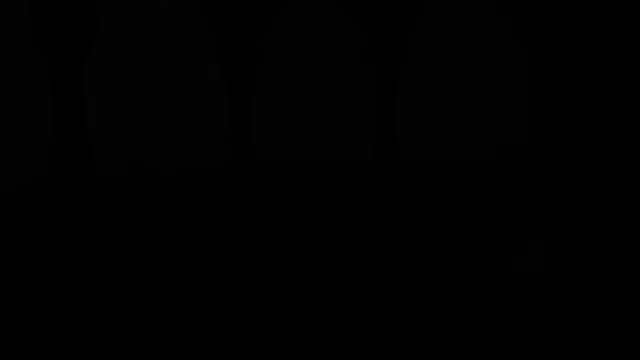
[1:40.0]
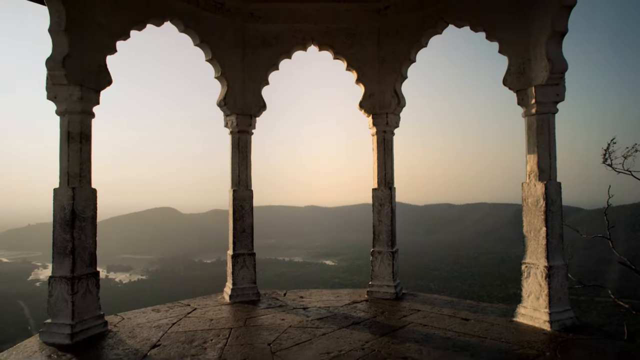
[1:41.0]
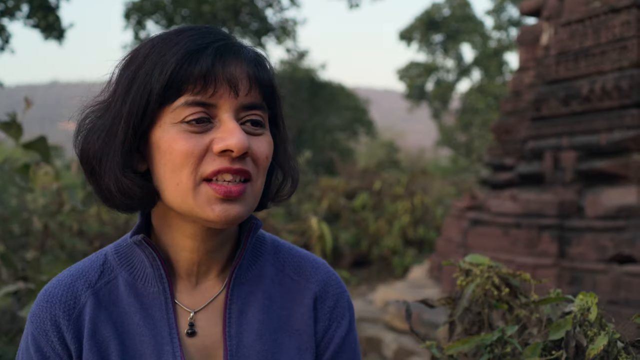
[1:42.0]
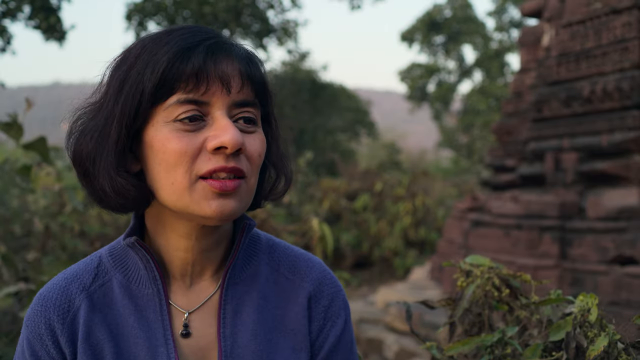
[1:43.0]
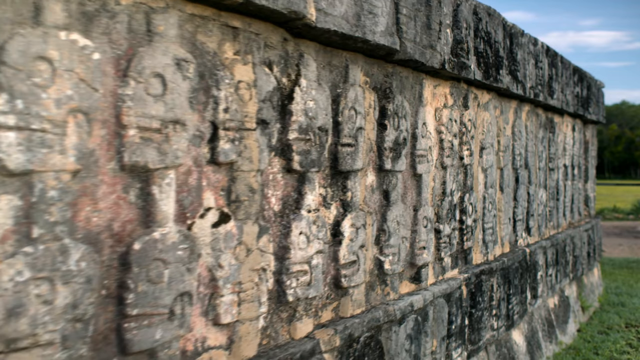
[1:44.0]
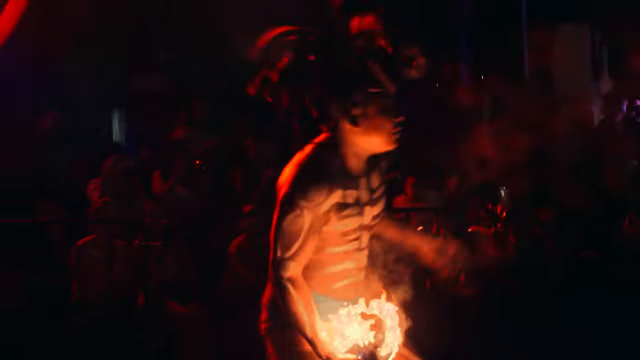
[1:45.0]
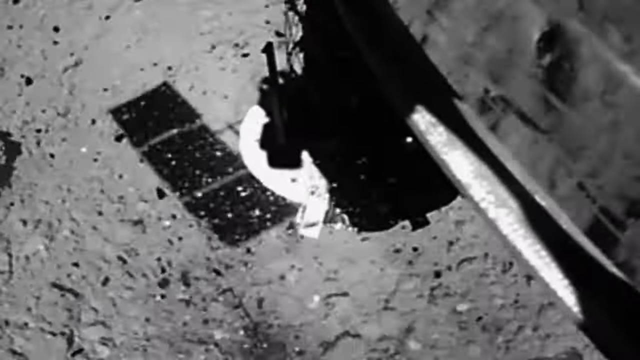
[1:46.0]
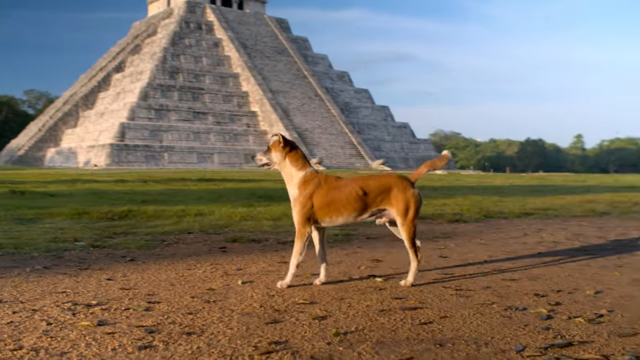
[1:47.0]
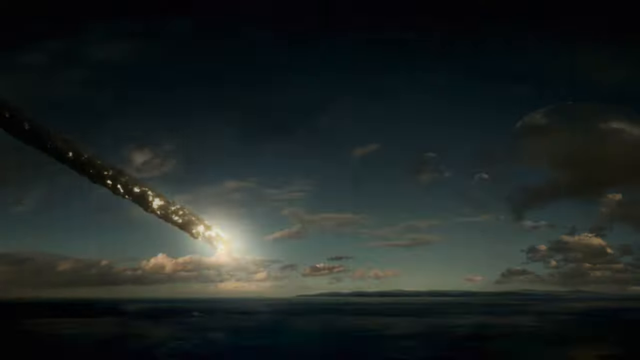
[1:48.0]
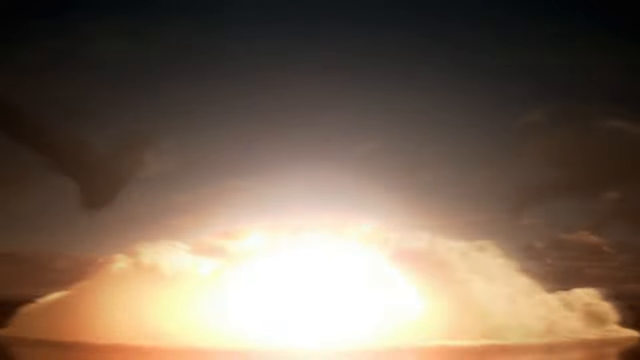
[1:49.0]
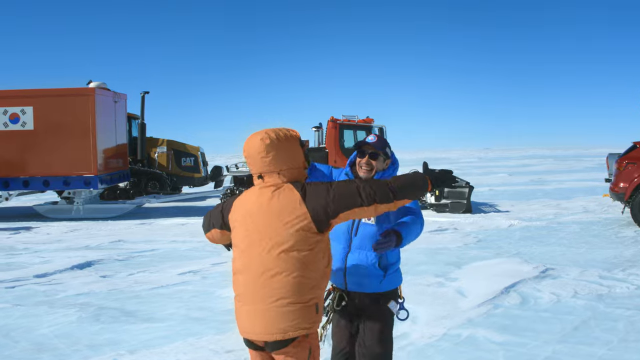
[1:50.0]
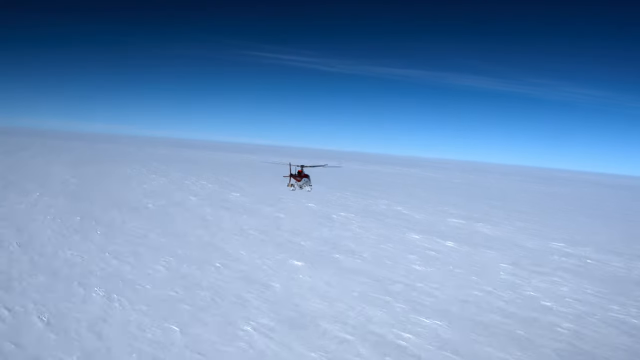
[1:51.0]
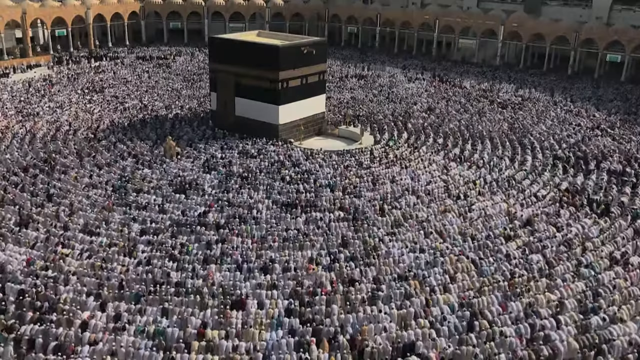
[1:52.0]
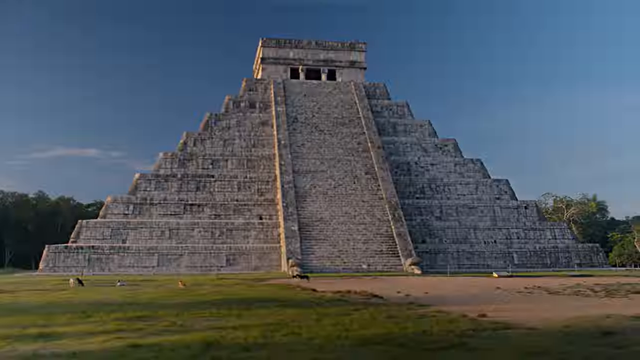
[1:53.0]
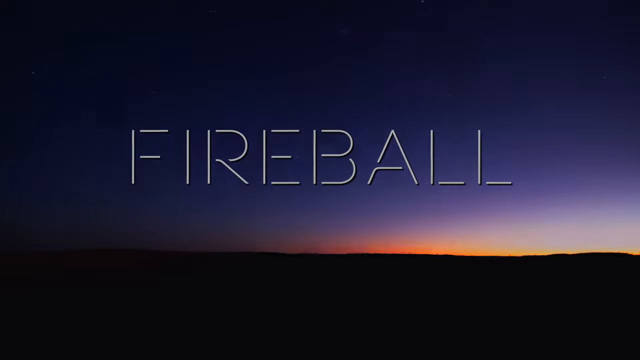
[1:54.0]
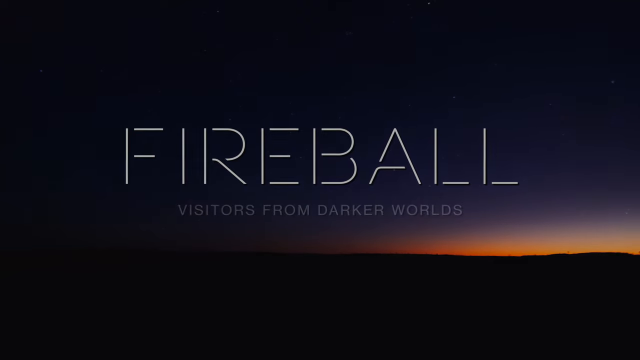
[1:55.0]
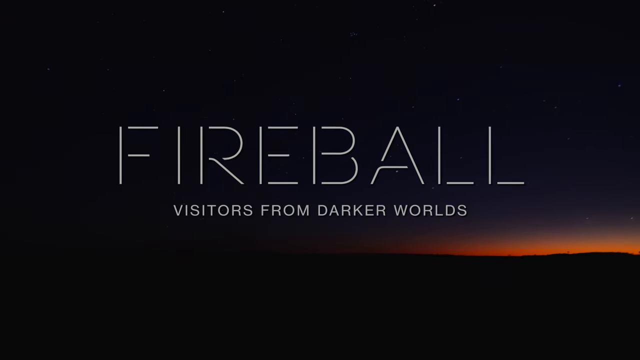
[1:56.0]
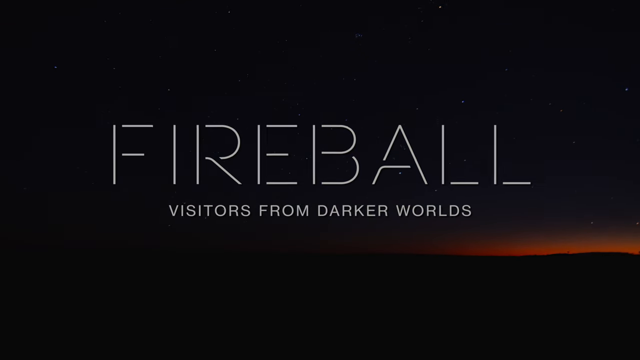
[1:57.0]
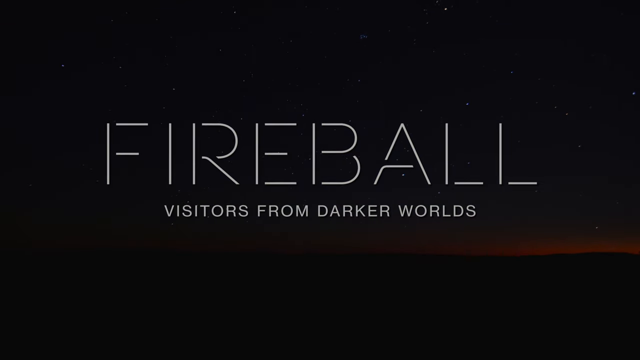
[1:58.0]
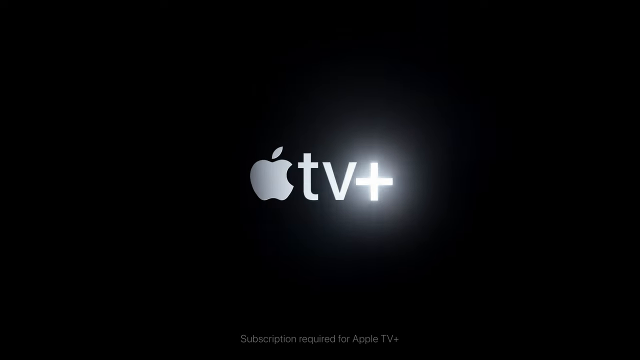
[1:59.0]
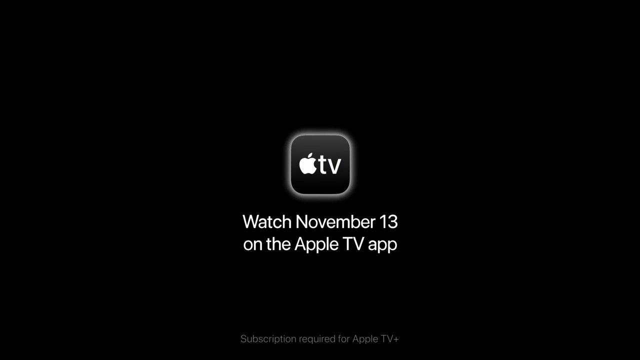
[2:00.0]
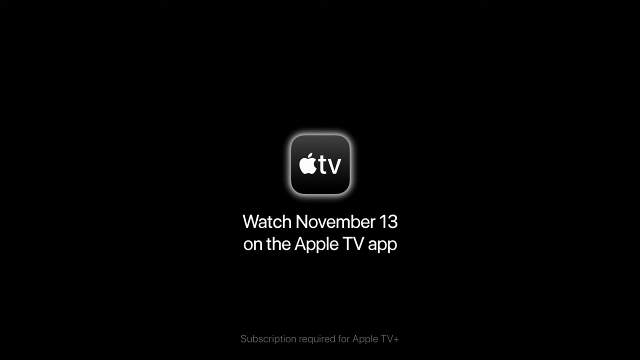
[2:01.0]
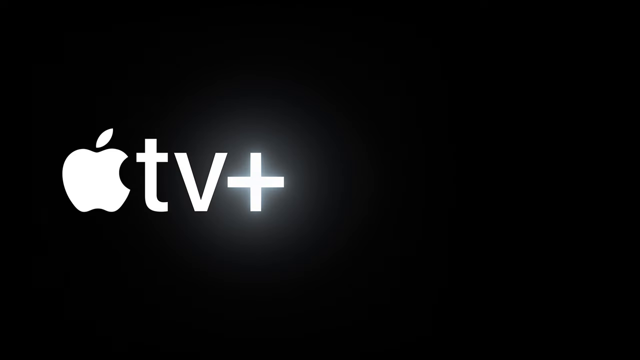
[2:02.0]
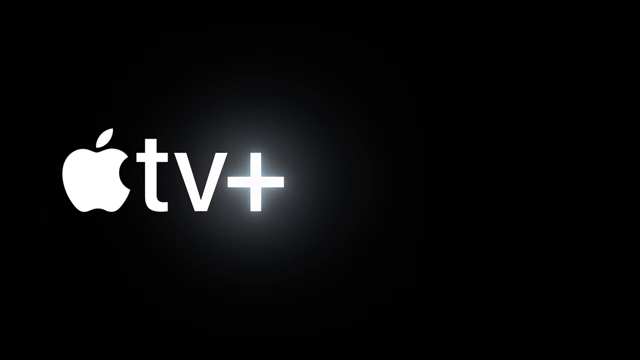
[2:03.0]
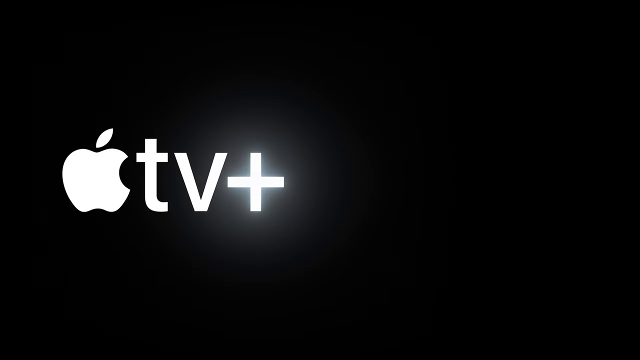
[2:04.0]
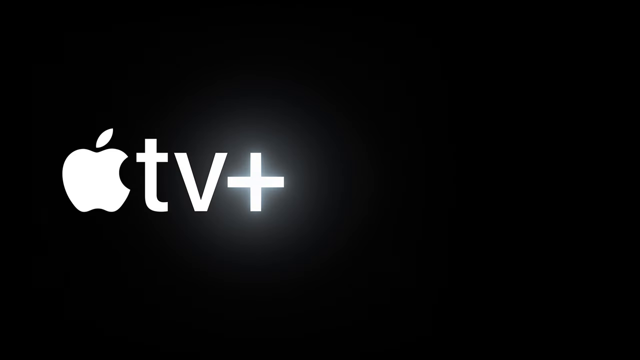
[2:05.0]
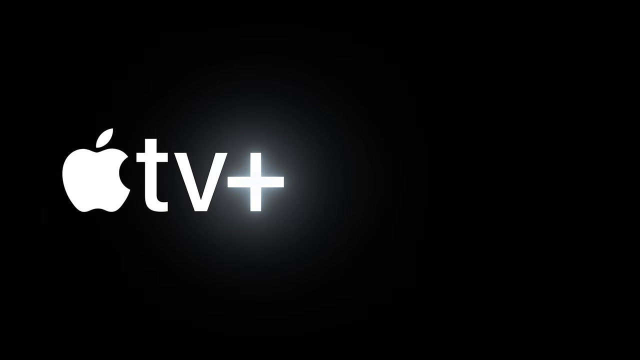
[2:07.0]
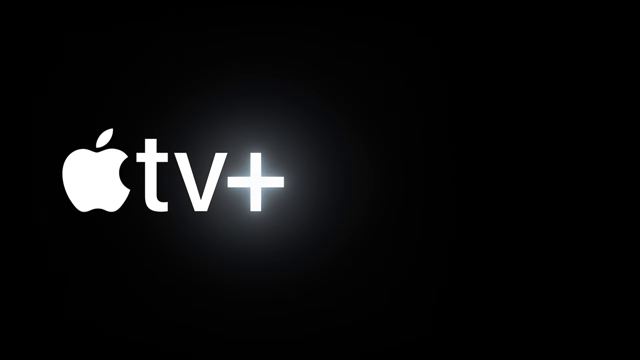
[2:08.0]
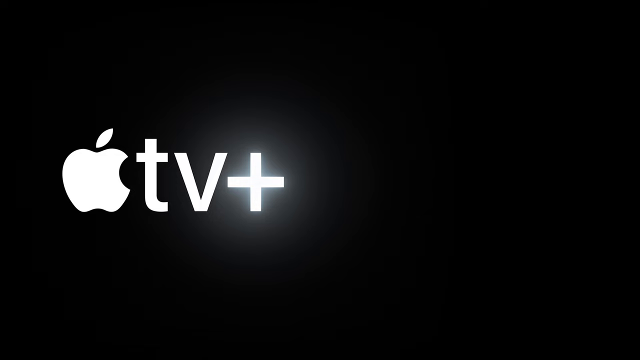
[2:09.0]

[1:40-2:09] People pray in a Hindu manner. A road has trees on both sides, and people dance on the beach. Two black men with white hair, both wearing green shirts, talk to the presenter as the sun is about to set. People are in a shrine, possibly praying, with sunlight seeping through the windows. A car travels along a road. Near the beach, people put palm leaves into a flame and place logs on top of the leaves as the sun is about to set. A man walks on an ice pack, and people walk in groups with their faces painted white. Flames appear, and then a picture of what looks like a planet glowing like the sun, though it is not the sun.